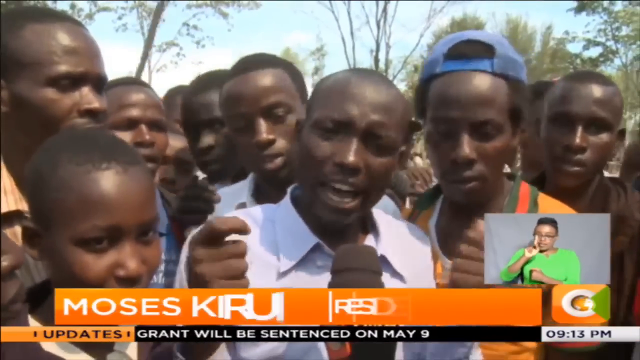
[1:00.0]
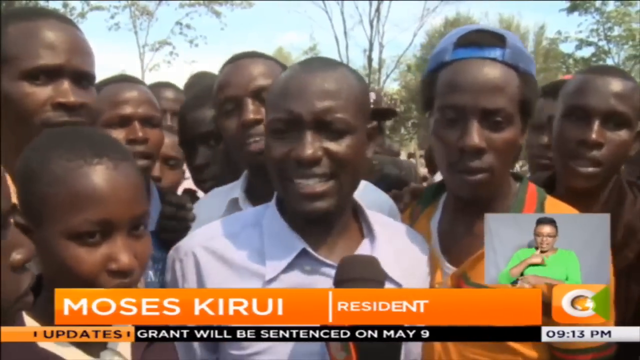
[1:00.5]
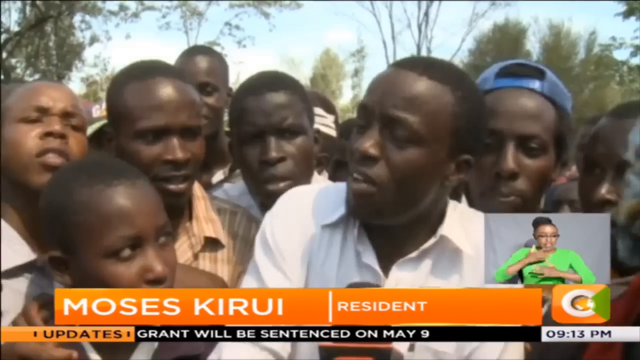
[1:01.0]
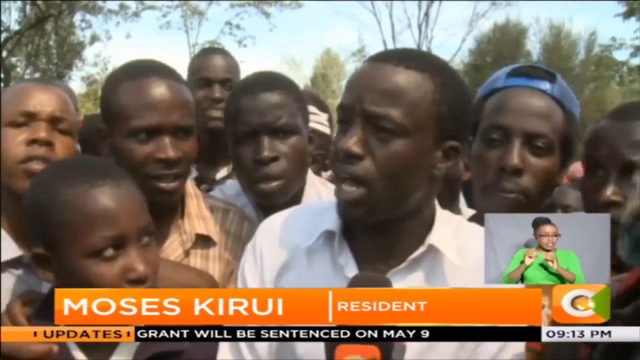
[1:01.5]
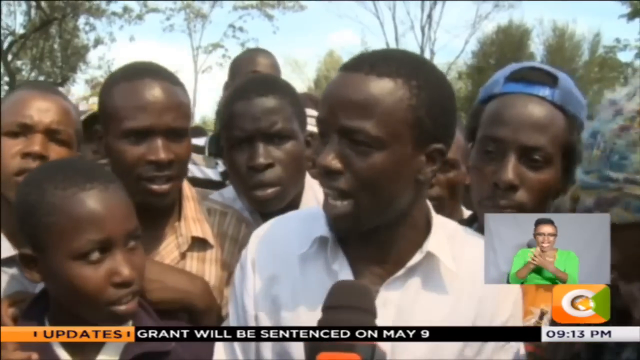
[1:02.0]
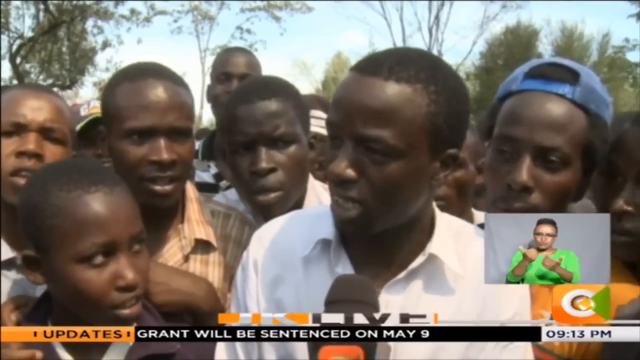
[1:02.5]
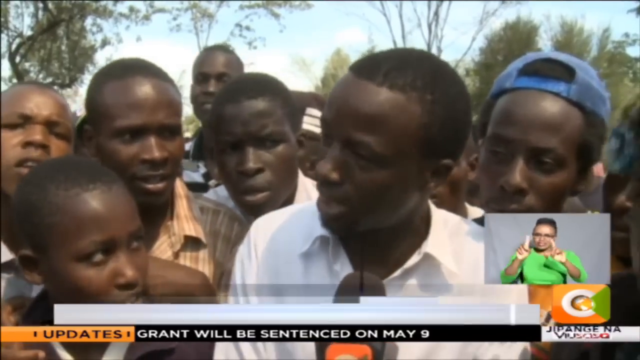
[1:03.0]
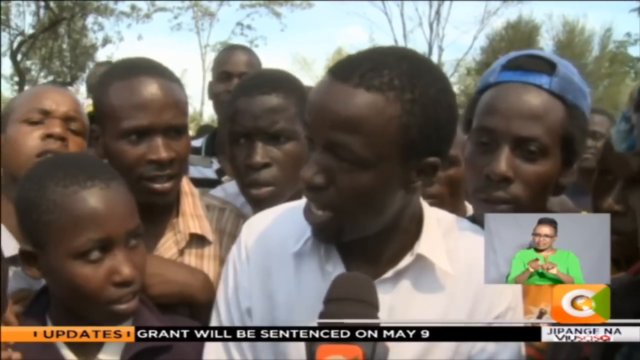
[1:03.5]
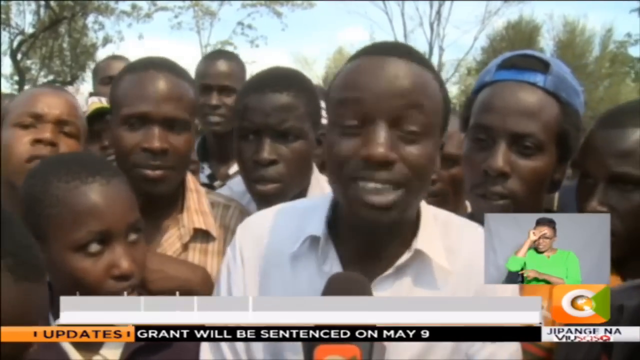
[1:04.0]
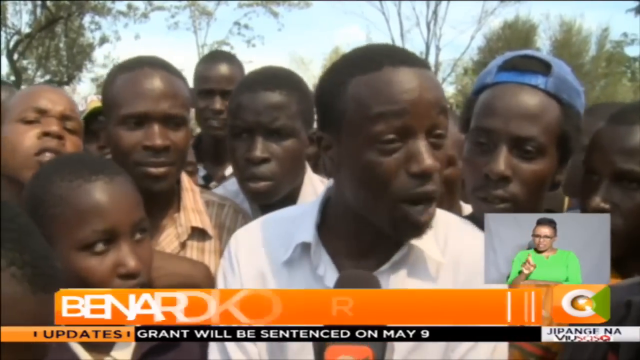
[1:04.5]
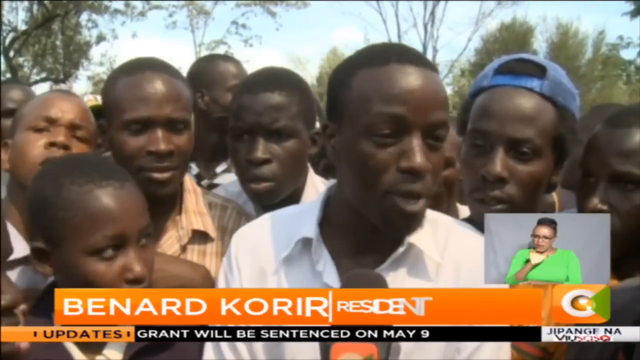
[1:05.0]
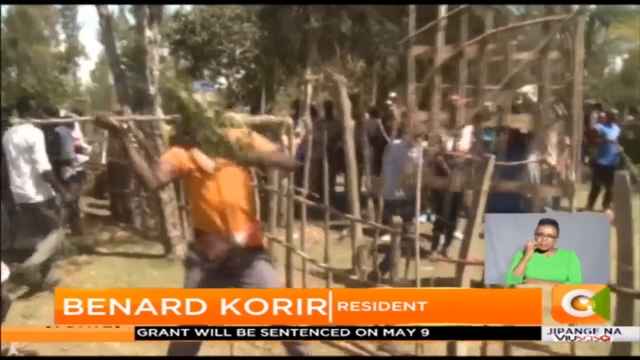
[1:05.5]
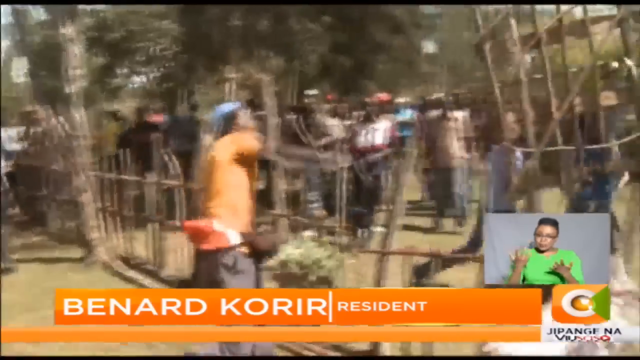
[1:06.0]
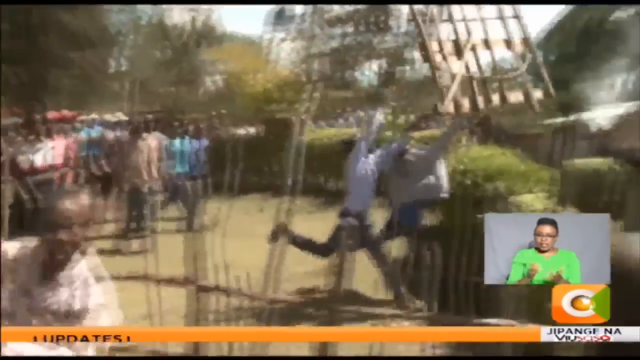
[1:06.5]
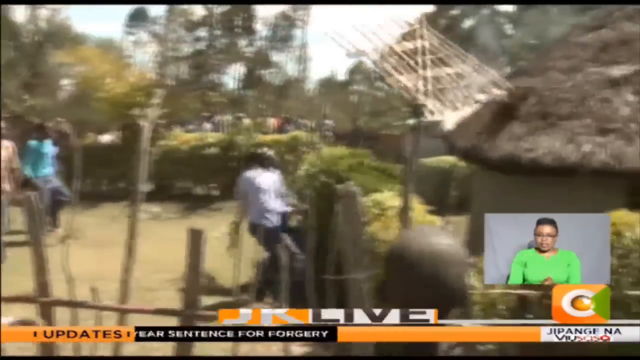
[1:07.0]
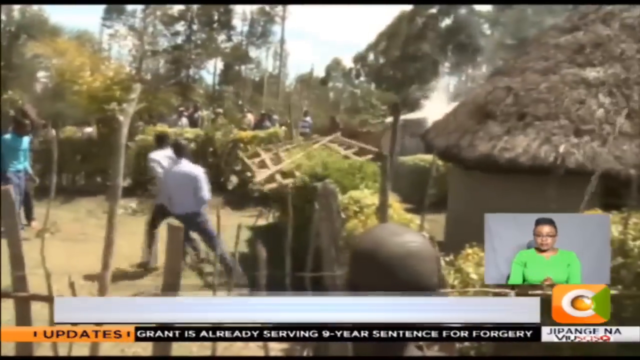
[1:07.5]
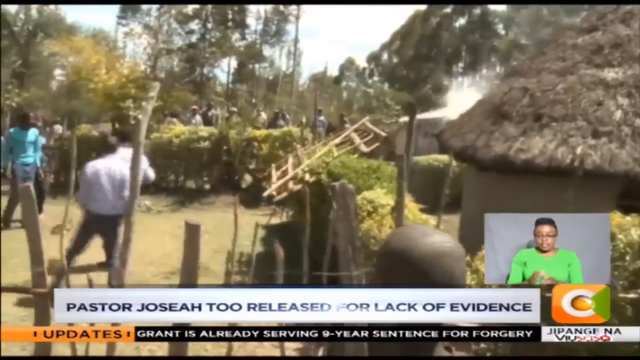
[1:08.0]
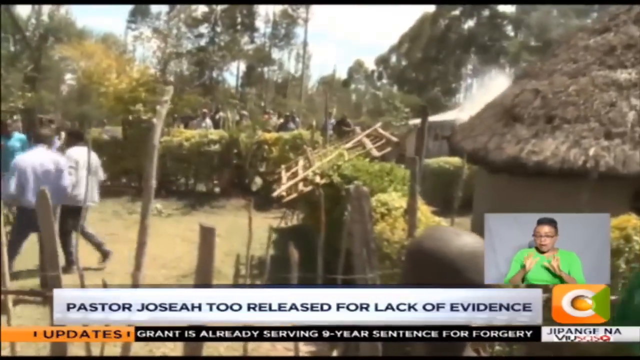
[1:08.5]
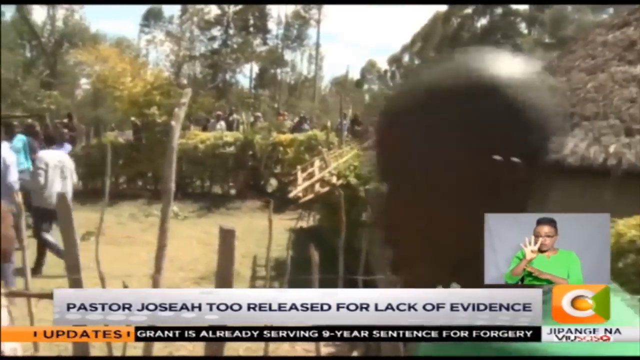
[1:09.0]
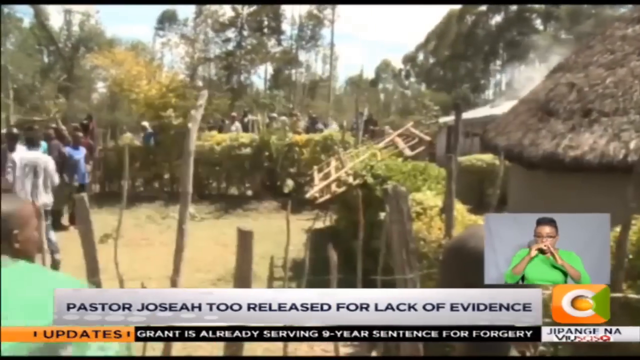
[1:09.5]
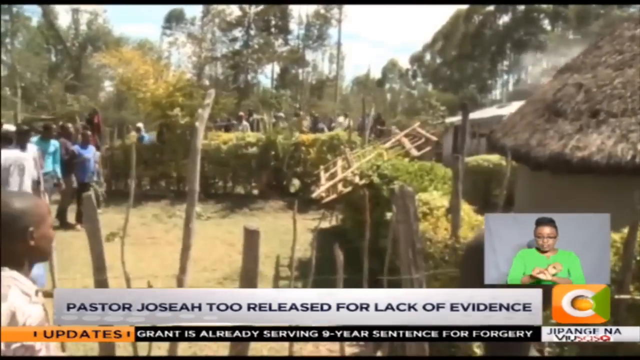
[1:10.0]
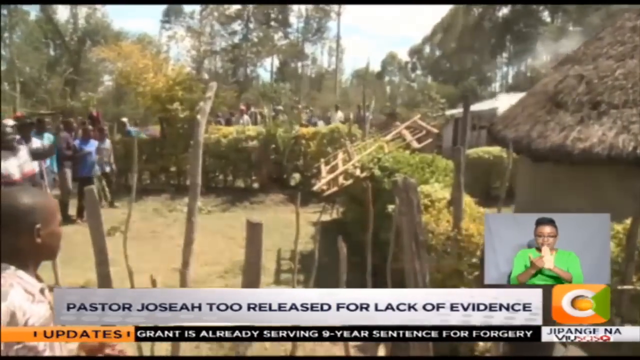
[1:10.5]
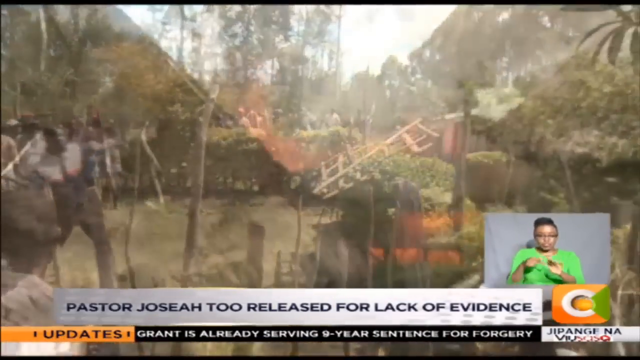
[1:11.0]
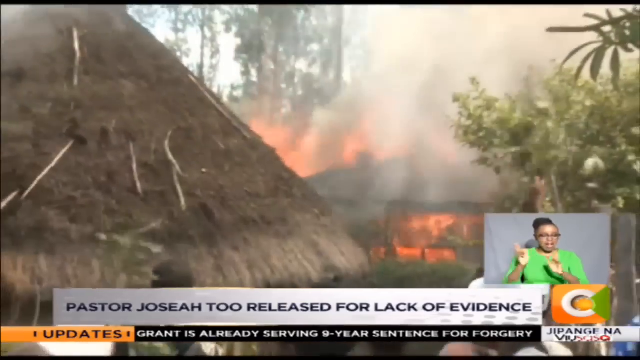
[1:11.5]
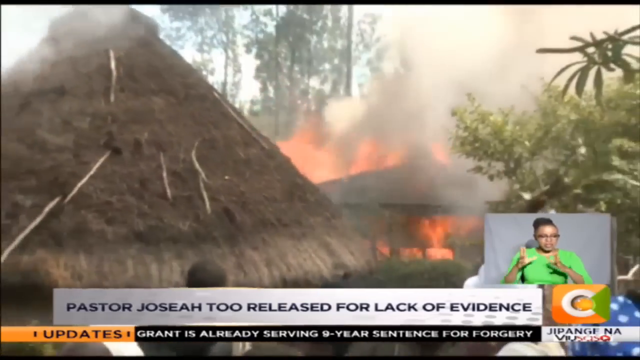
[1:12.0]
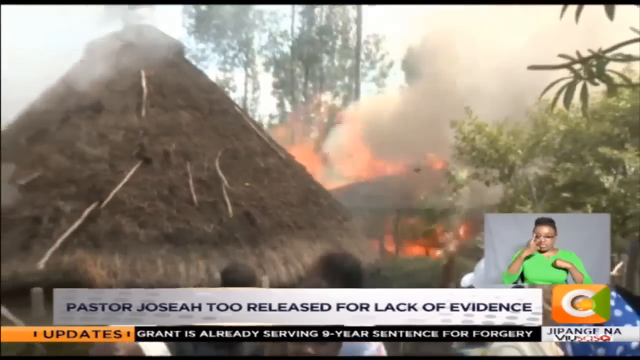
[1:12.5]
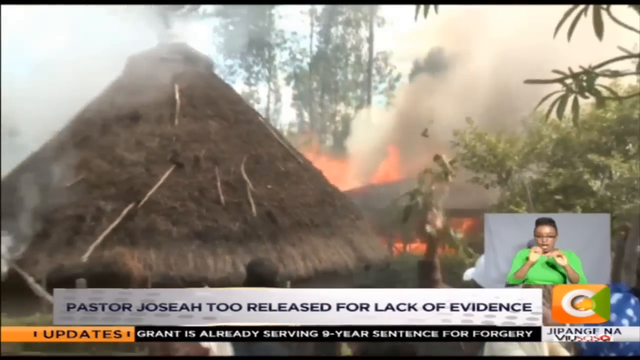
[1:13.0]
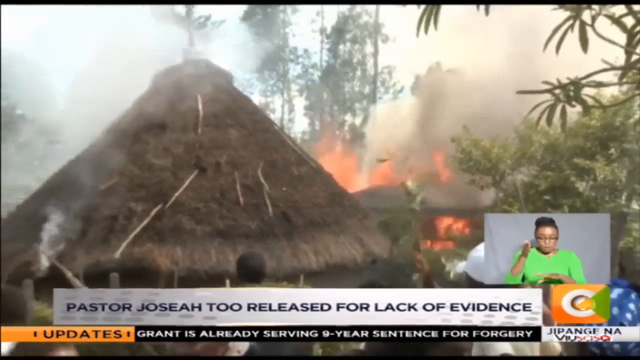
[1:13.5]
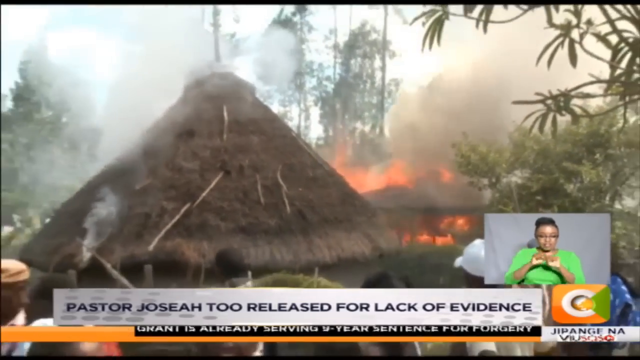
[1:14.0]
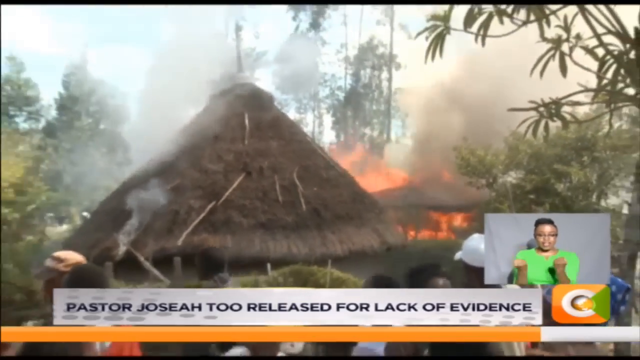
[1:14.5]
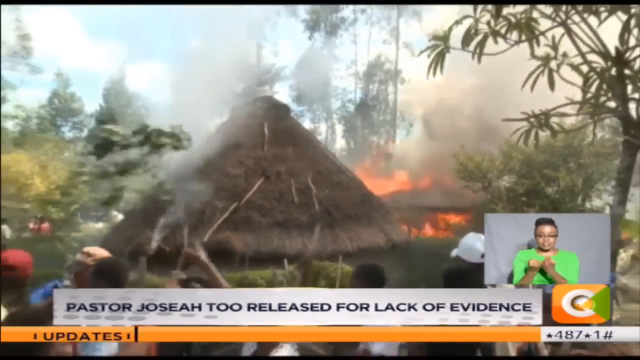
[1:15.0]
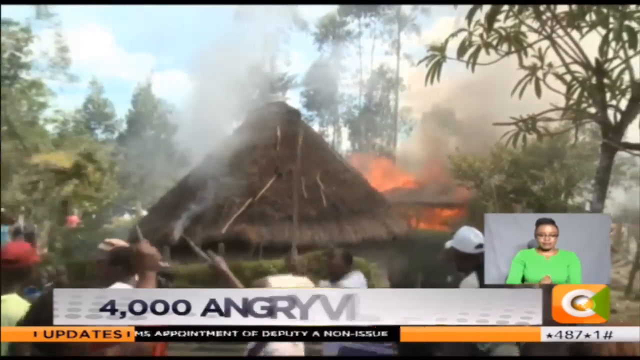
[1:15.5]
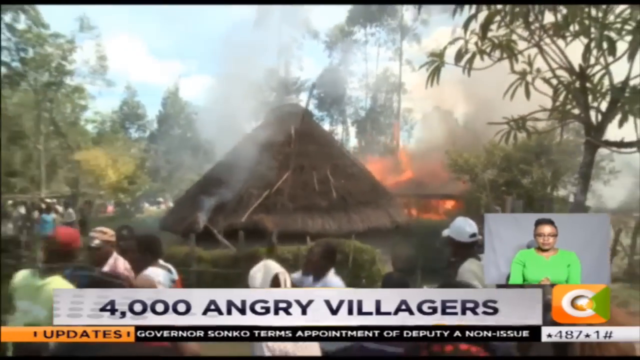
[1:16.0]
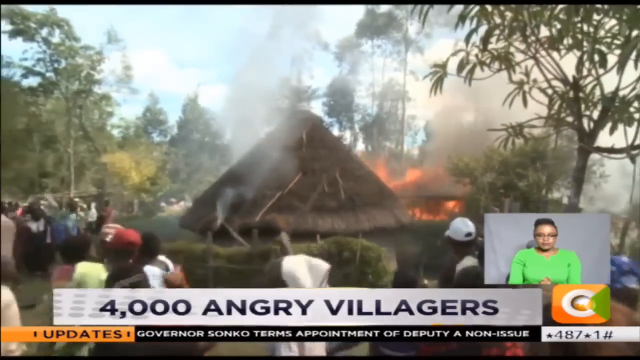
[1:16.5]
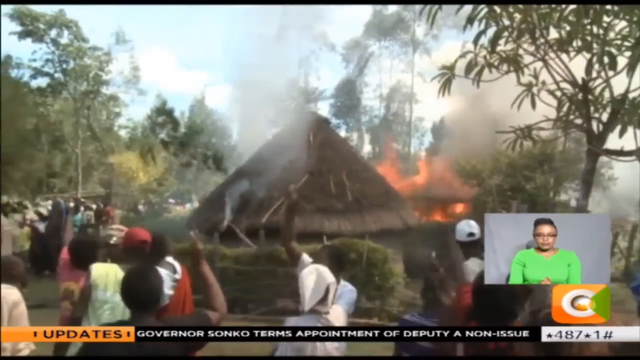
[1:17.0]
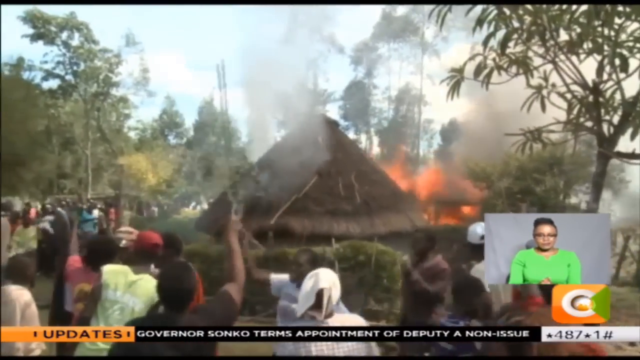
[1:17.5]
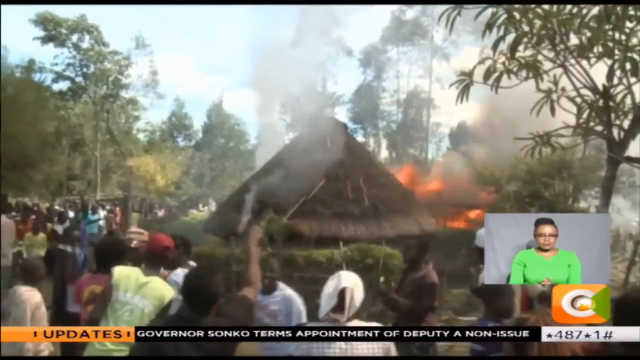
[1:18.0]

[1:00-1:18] A man surrounded by other people is interviewed; he looks agitated and upset, and the video cuts to another interview. Both men are identified as residents. The video then cuts to what appears to be rioting, with a person throwing a fence at a house and a large crowd gathered around. Something is on fire in the background, and people hold up branches and jump up and down. A title at the bottom reads "Pastor Joseah Too Released for Lack of Evidence", which changes to "4,000 Angry Villagers". Throughout, a small video towards the right shows a woman wearing a green shirt and glasses over a grey background providing a sign language translation. Text at the bottom also updates, reading "Grant will be sentenced on May 9" and then "Grant is already serving 9-year sentence for forgery".